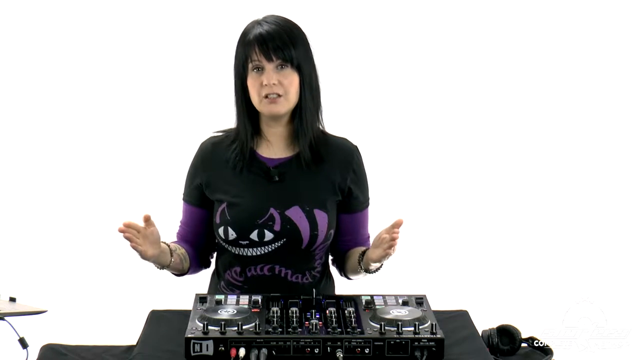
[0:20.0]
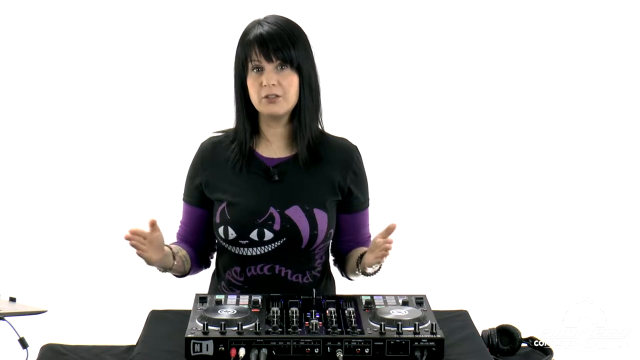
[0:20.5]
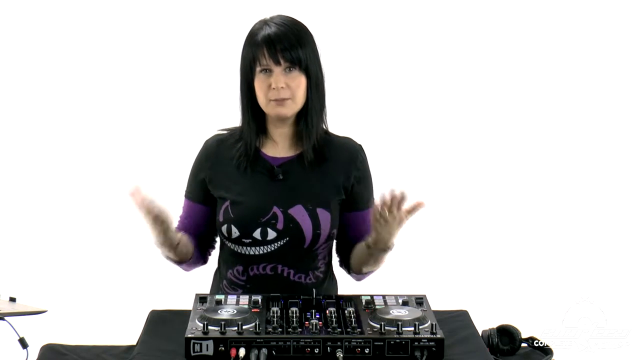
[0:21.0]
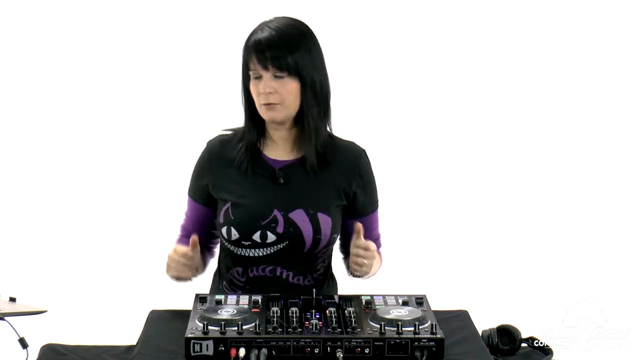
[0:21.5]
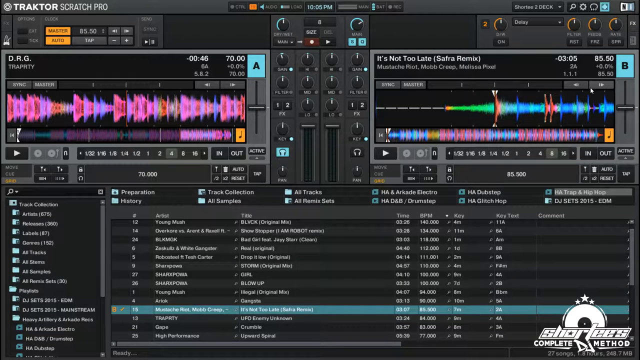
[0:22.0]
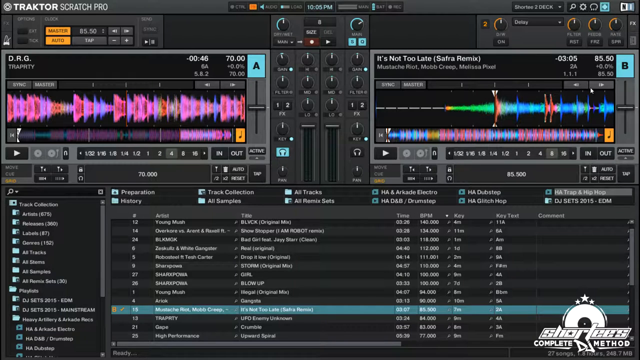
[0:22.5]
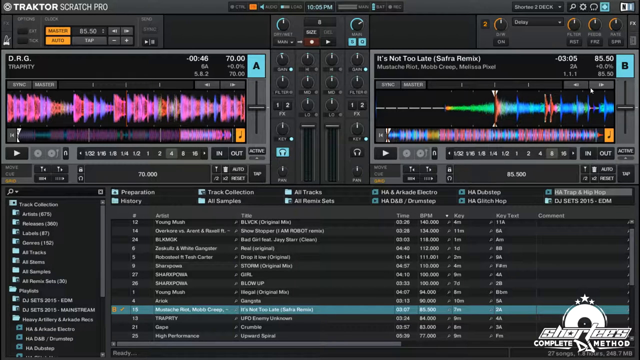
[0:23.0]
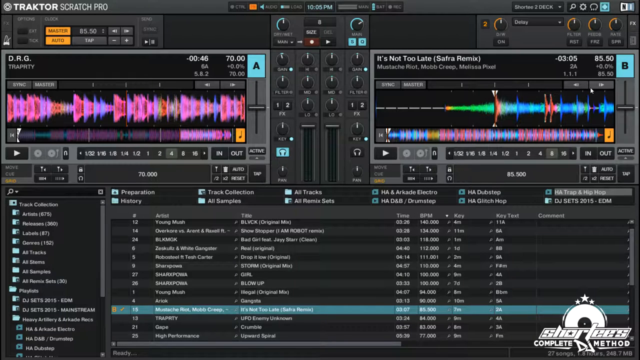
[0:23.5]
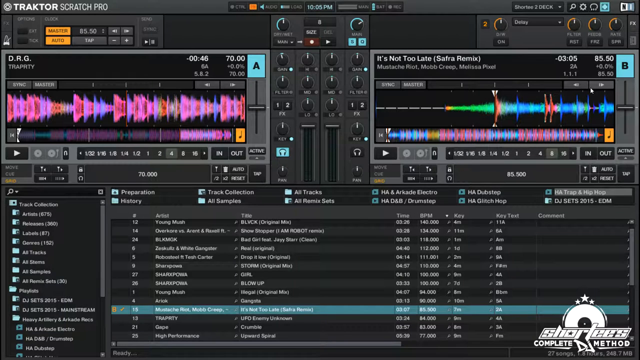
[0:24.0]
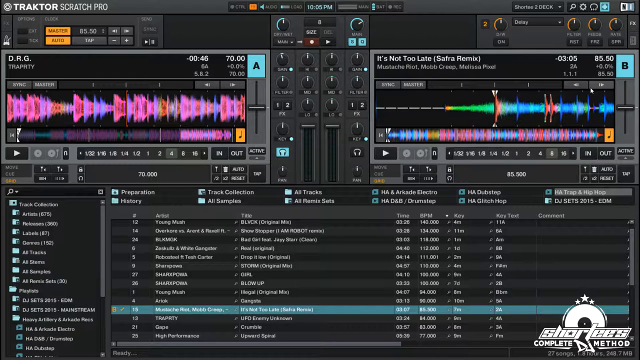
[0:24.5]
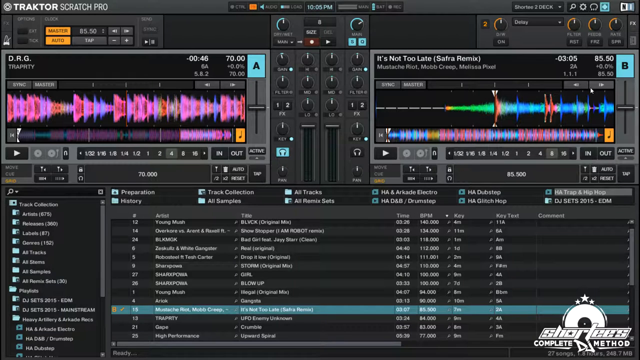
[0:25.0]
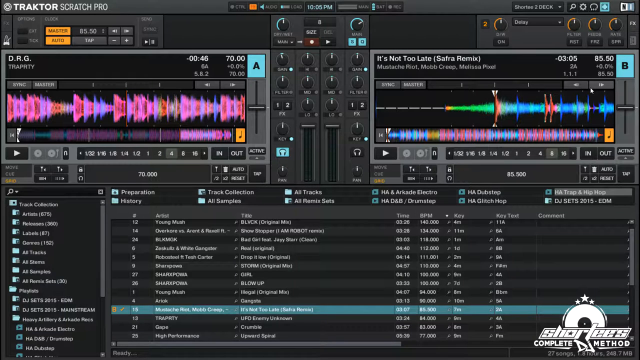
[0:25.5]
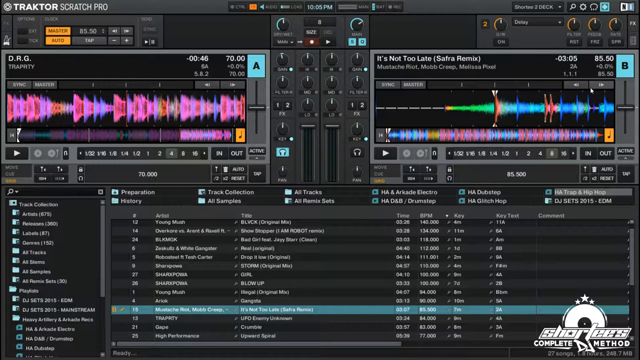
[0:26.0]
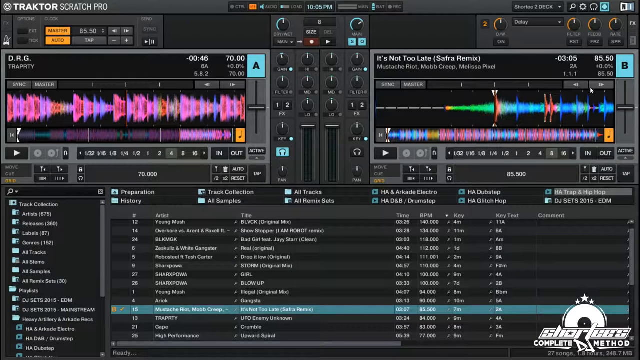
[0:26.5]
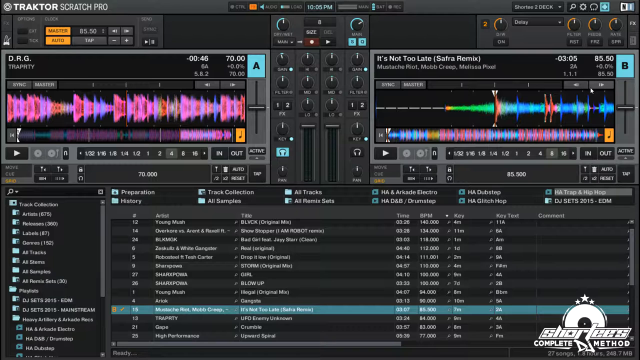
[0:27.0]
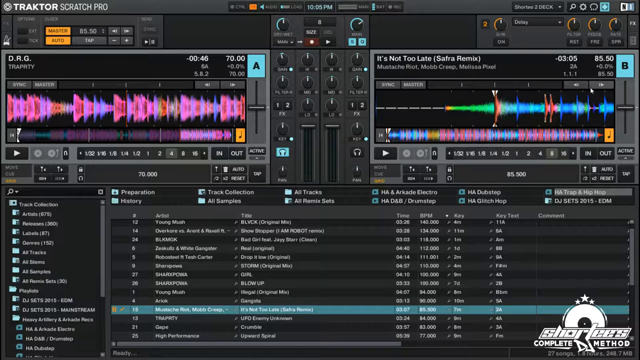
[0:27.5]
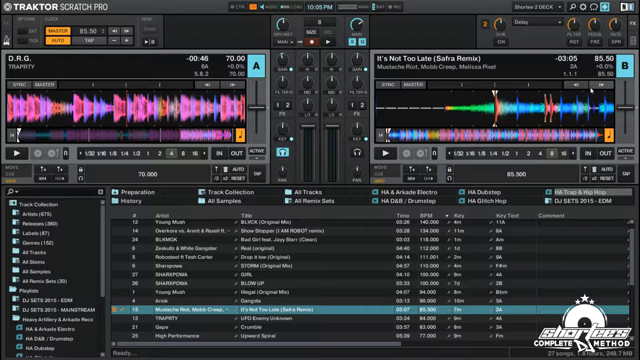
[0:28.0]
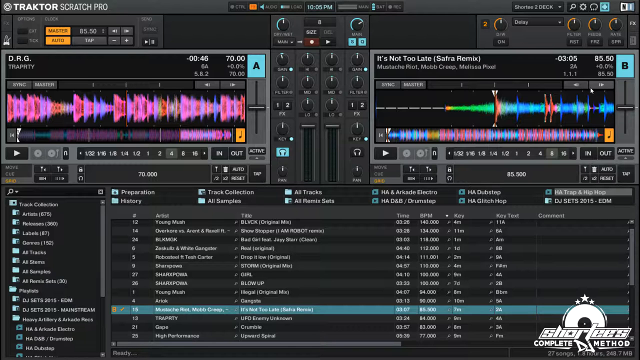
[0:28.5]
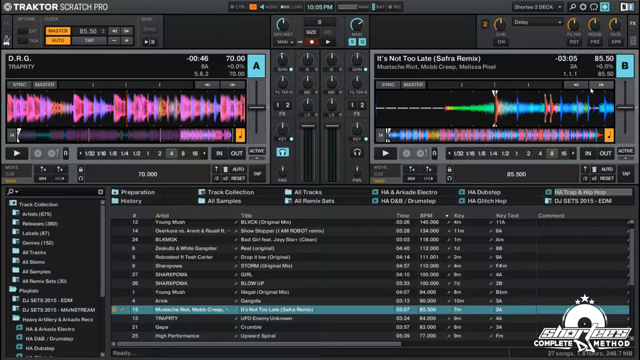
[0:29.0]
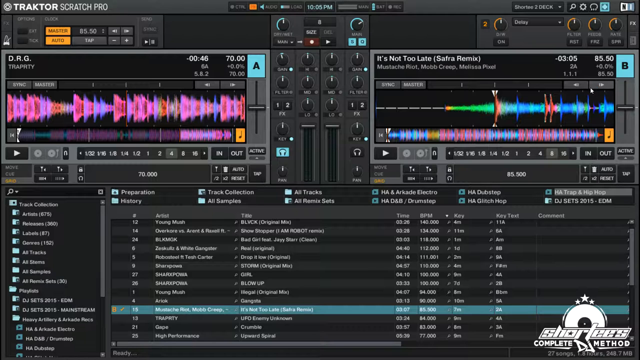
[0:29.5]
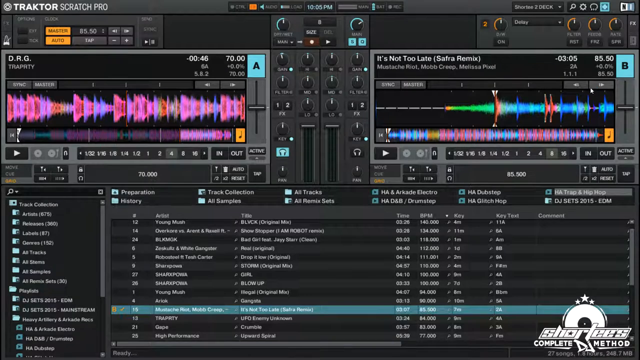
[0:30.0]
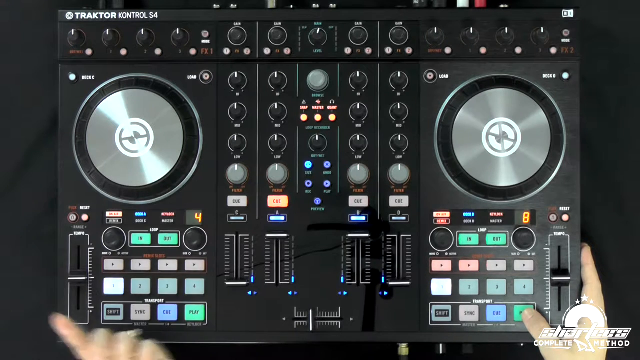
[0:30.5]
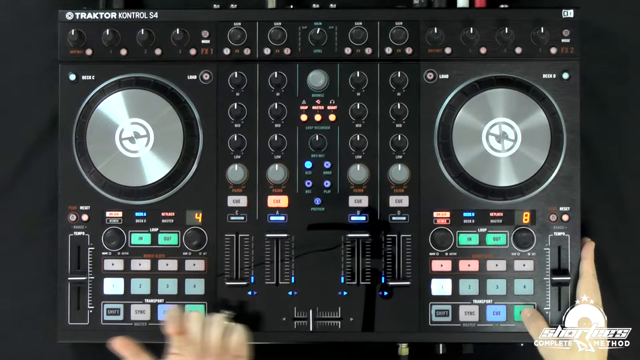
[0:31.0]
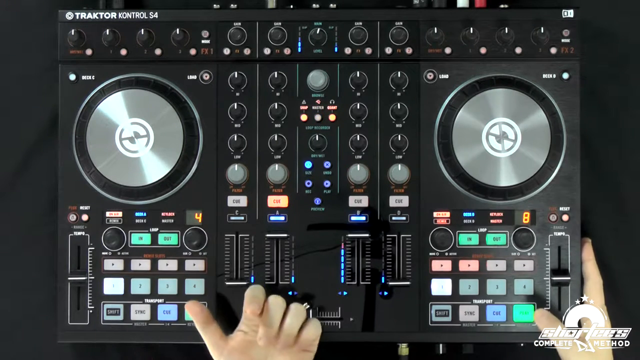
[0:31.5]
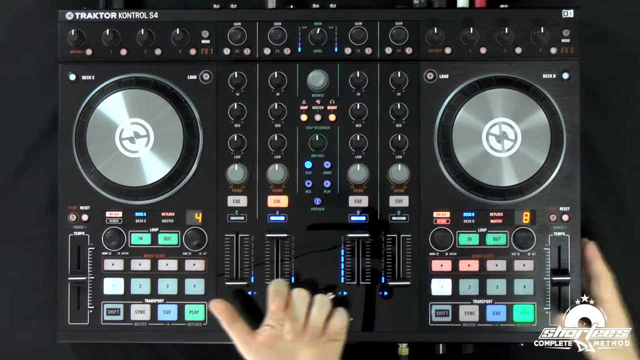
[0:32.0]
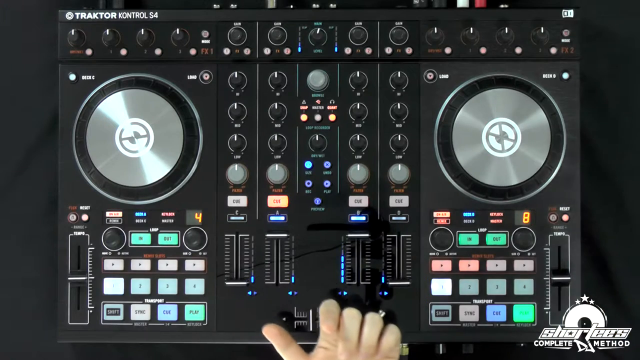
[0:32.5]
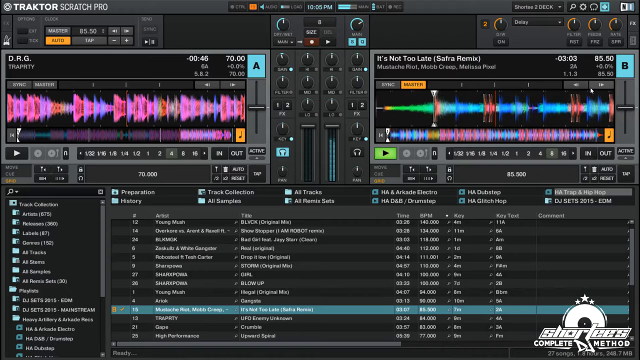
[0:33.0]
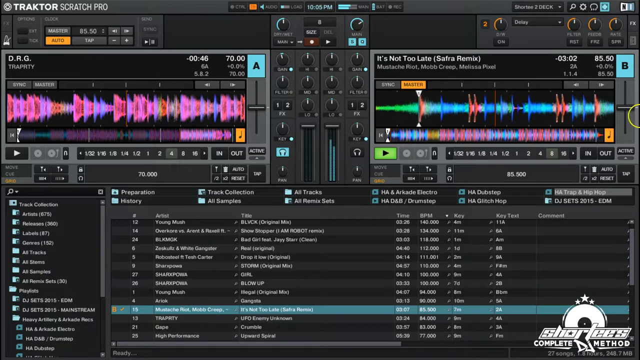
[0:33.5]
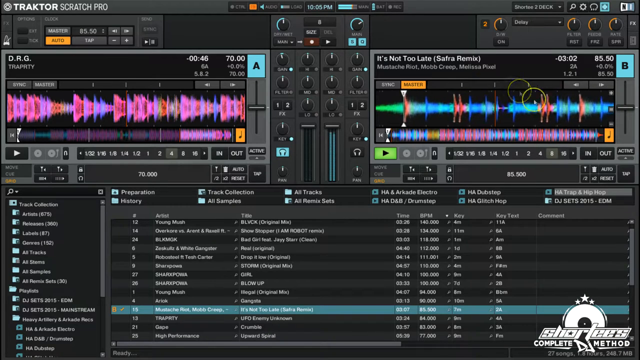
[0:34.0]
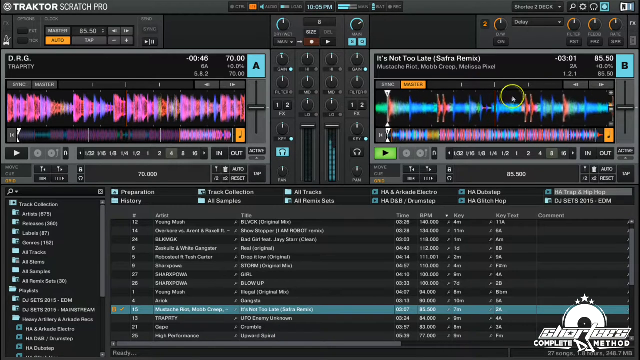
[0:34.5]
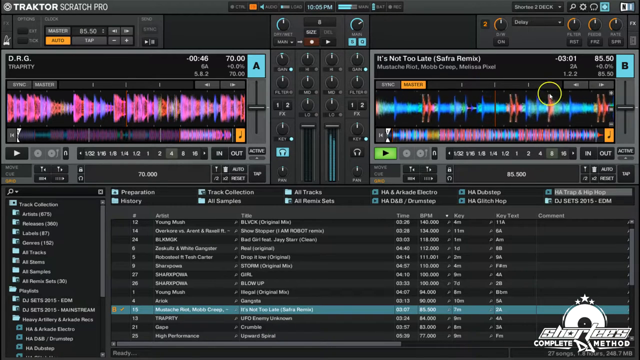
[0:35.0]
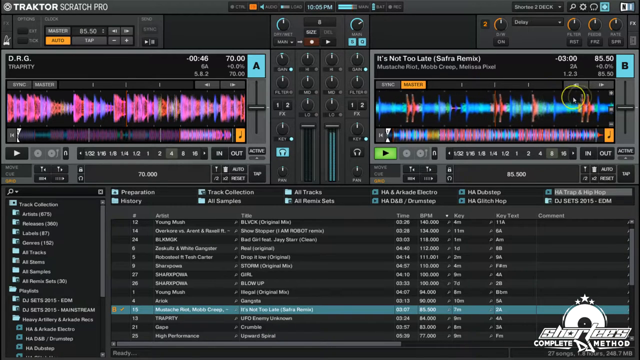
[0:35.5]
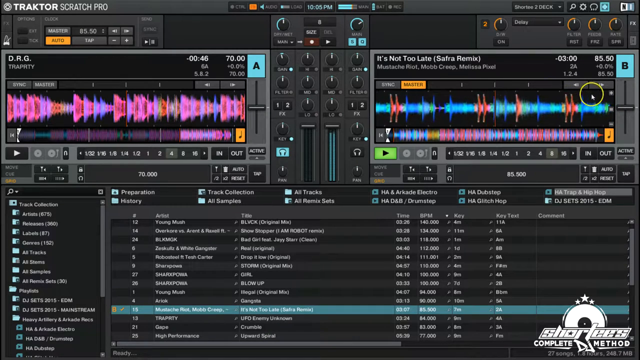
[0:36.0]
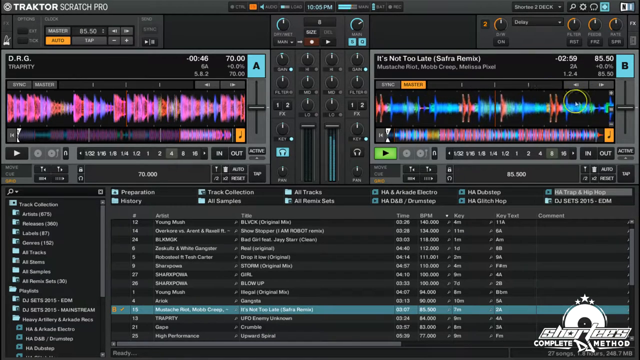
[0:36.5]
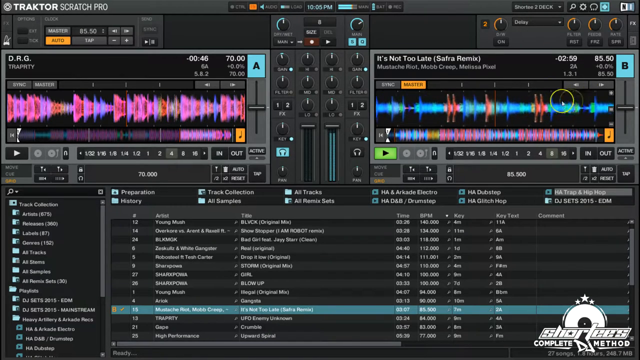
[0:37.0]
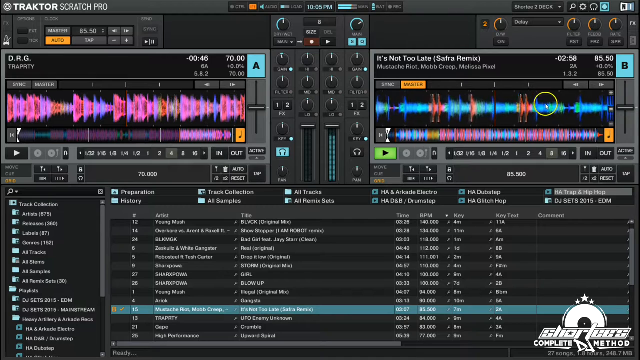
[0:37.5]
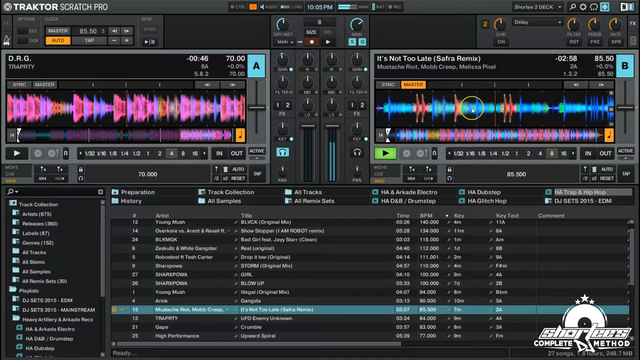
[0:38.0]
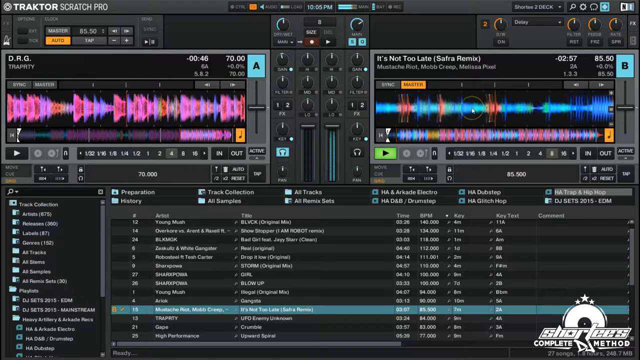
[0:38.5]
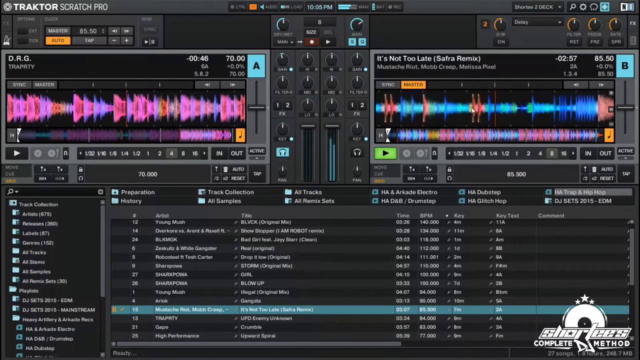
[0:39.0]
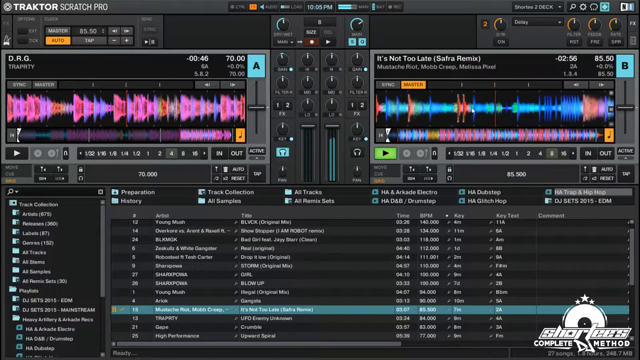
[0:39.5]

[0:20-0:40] The woman standing in front of the DJ mixing board is Caucasian, with long dark hair, perhaps in her late 30s, and wears a black shirt with purple on it that looks like a cat. The view then moves to a computer screen of the soundboard itself, full of colors, buttons and graphs. The song playing is "It's not too late," and beneath it are the colors green, red and blue. At the bottom is a watermark reading "Shortee's complete DJ method." The screen shows many buttons and knobs within the software that change the frequency, tone and sound.